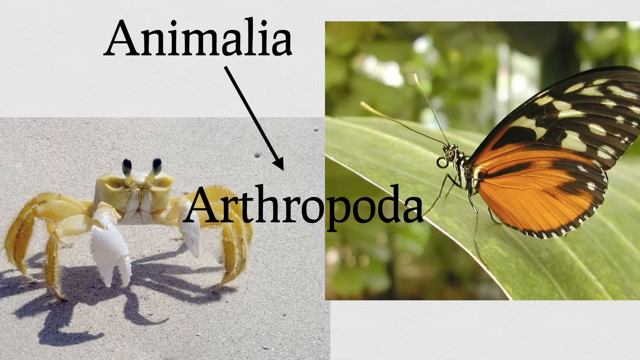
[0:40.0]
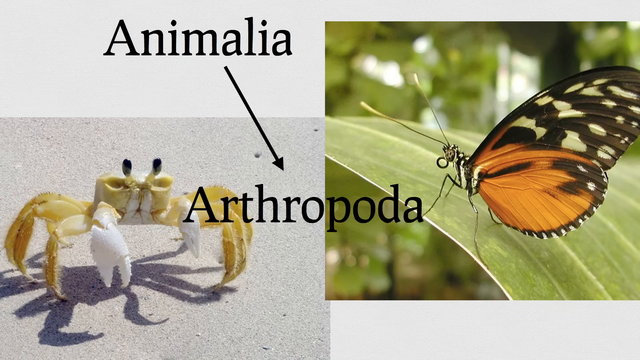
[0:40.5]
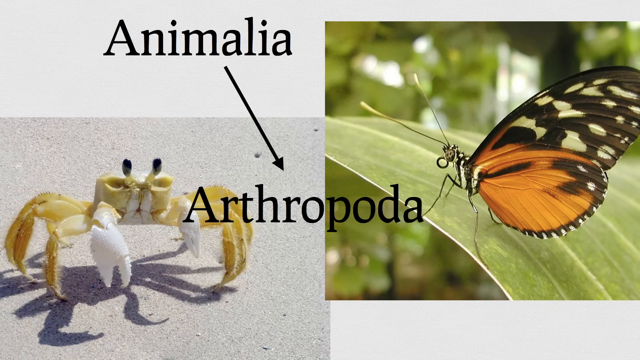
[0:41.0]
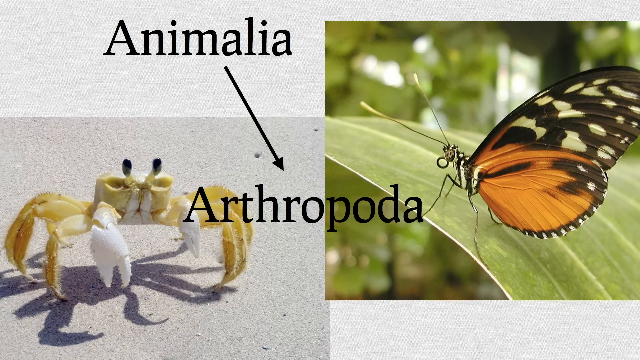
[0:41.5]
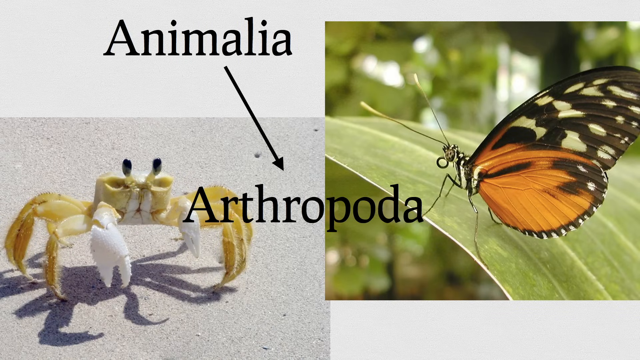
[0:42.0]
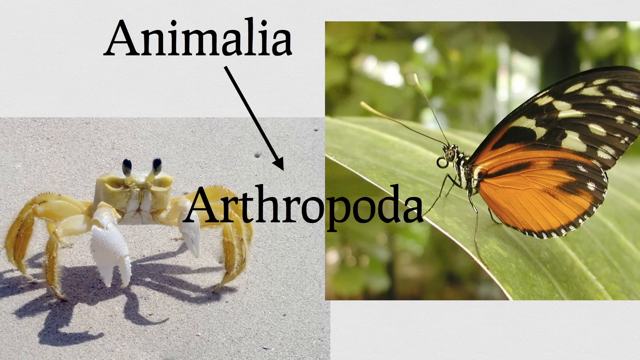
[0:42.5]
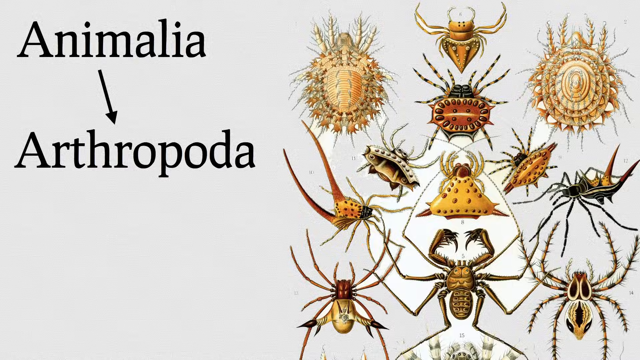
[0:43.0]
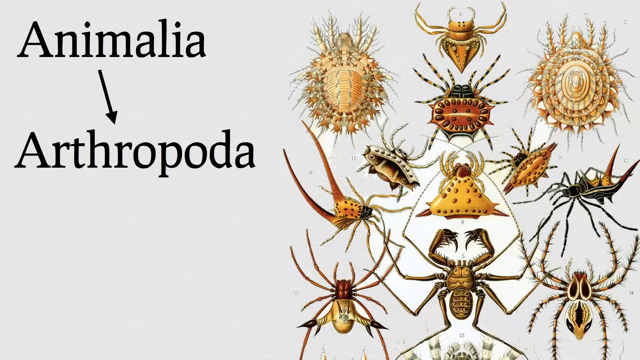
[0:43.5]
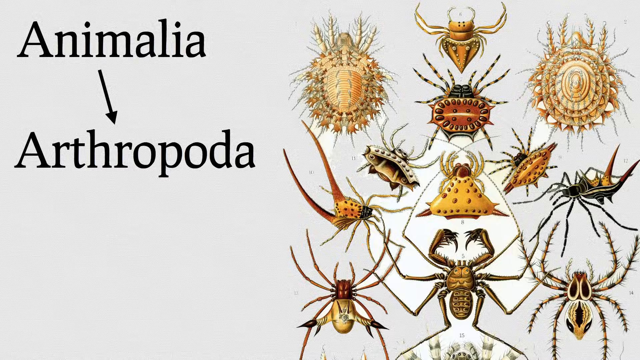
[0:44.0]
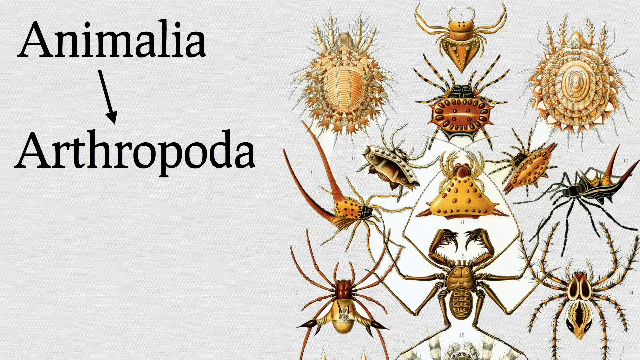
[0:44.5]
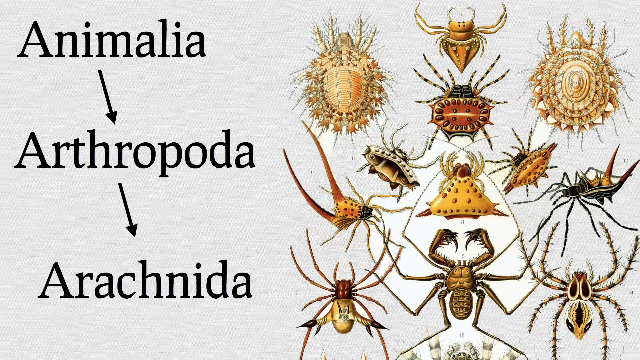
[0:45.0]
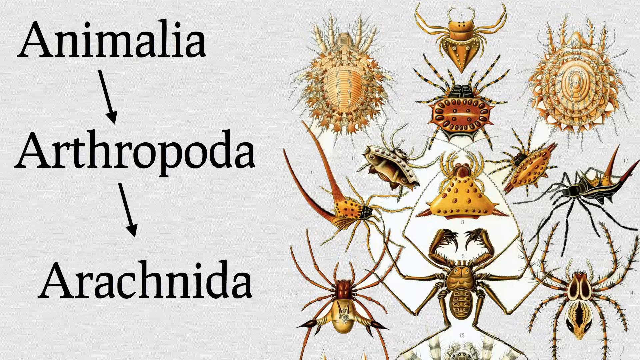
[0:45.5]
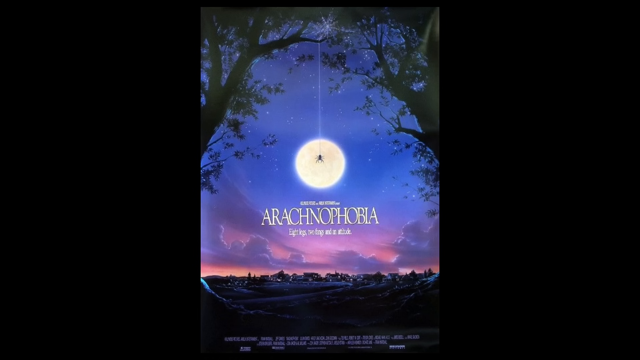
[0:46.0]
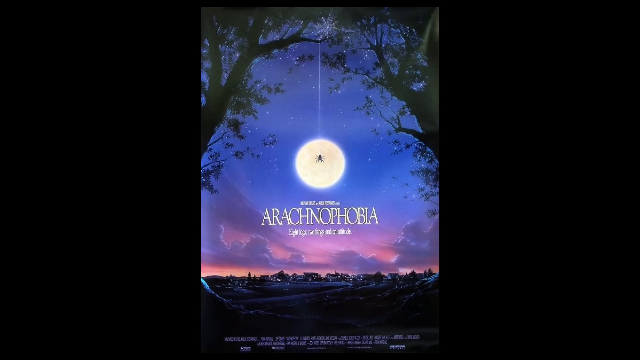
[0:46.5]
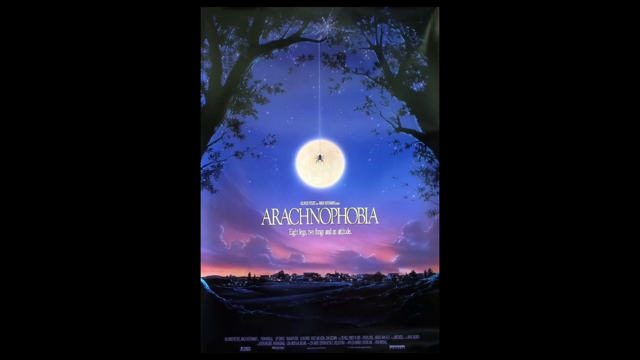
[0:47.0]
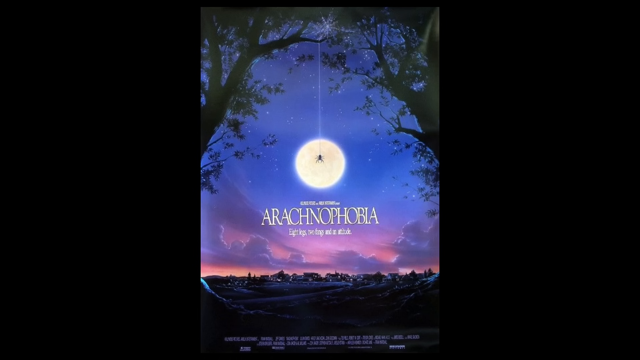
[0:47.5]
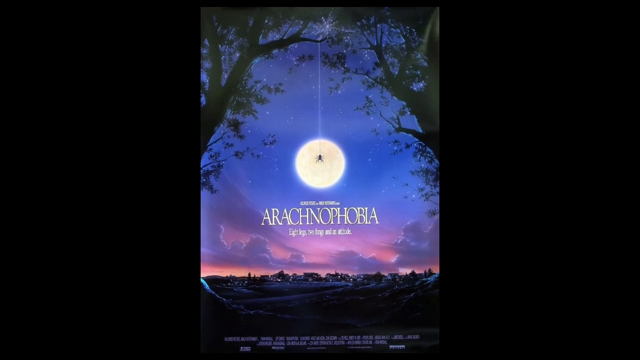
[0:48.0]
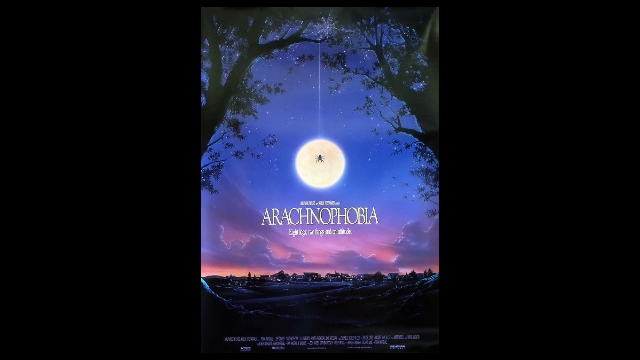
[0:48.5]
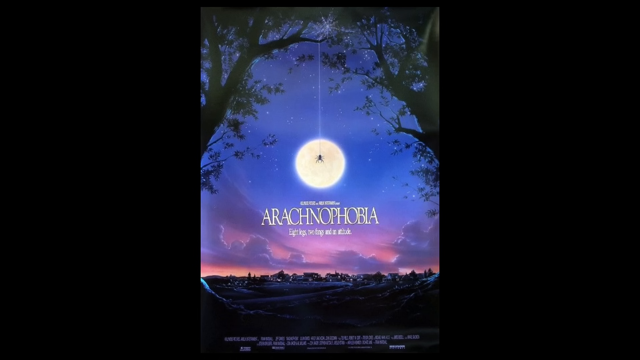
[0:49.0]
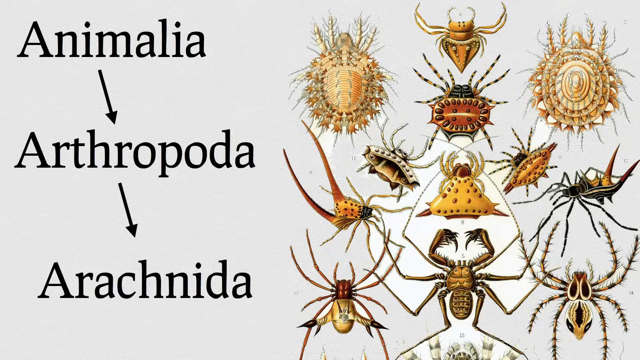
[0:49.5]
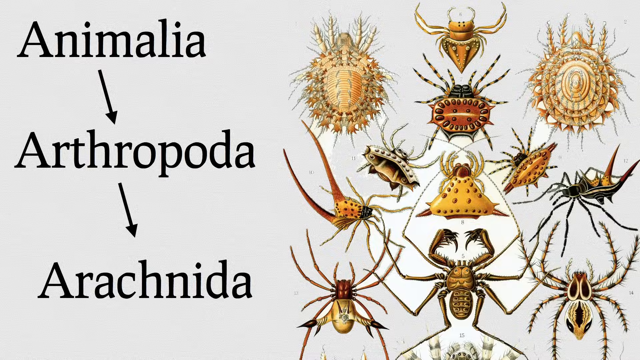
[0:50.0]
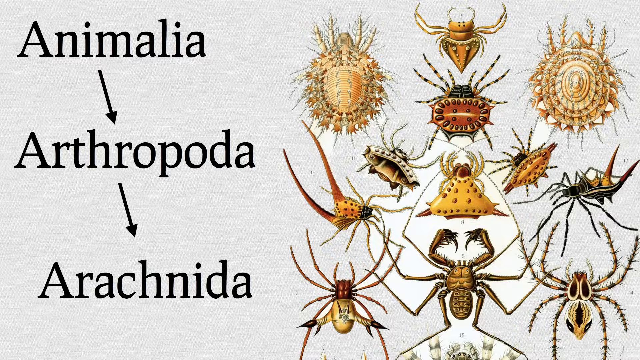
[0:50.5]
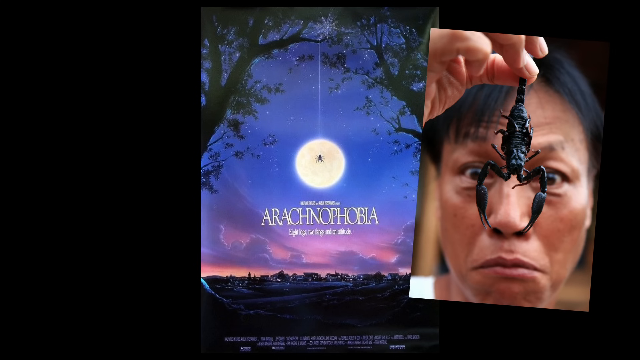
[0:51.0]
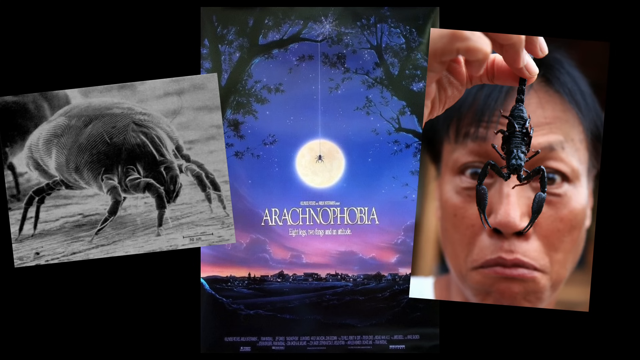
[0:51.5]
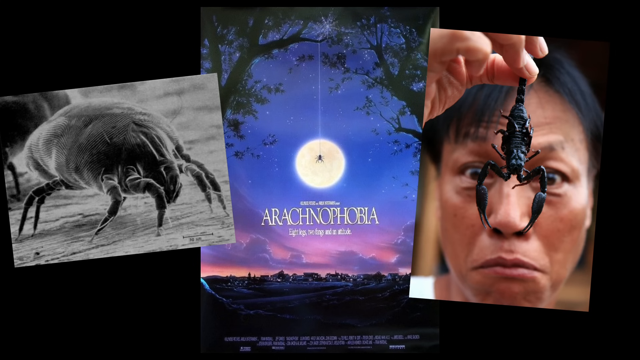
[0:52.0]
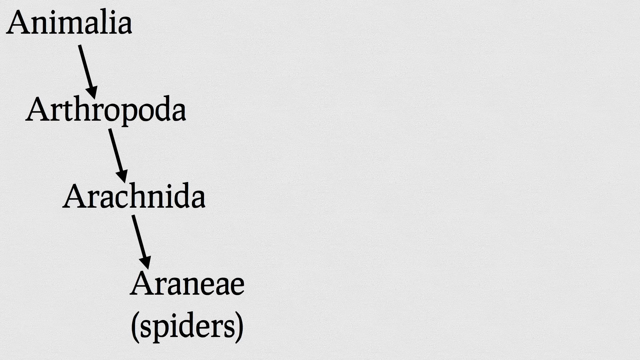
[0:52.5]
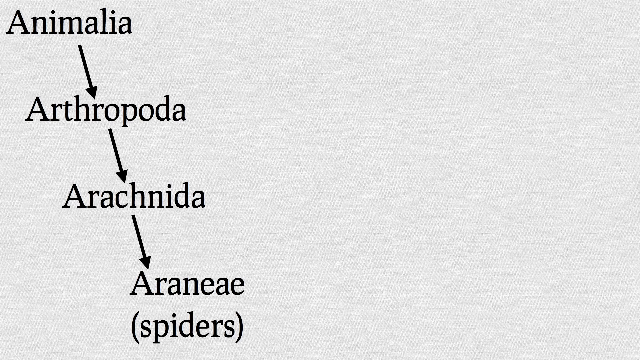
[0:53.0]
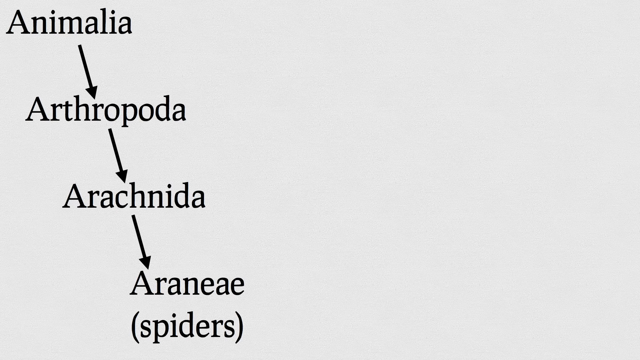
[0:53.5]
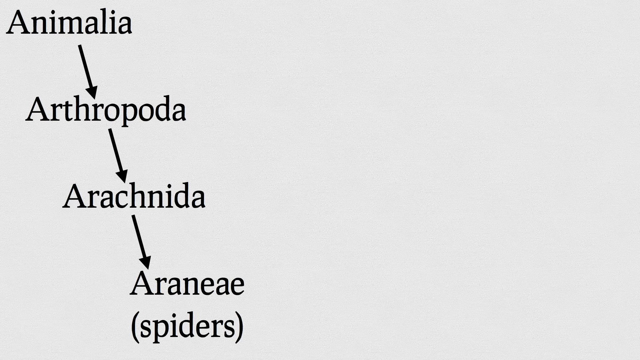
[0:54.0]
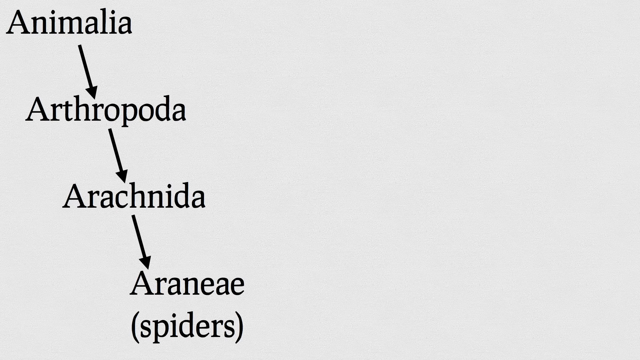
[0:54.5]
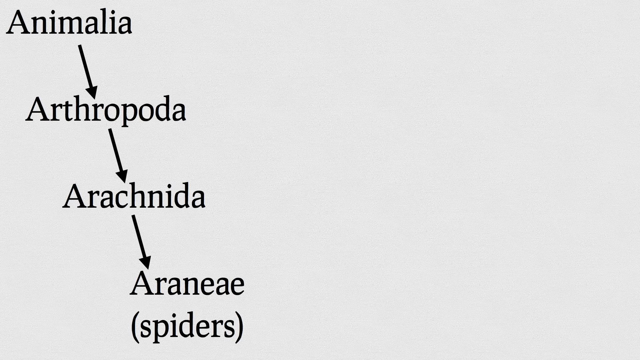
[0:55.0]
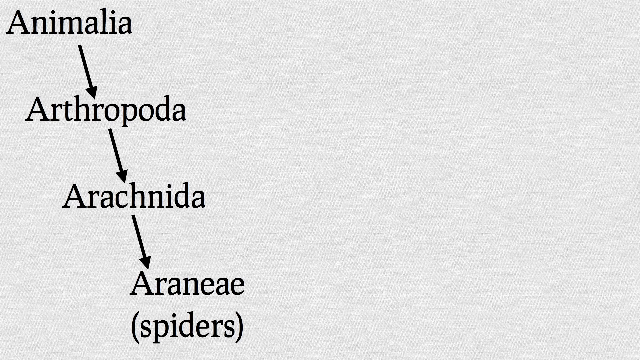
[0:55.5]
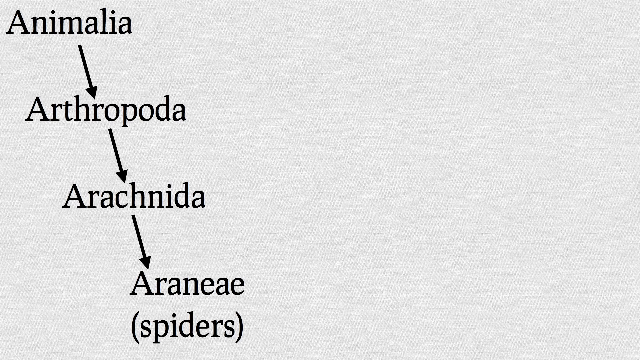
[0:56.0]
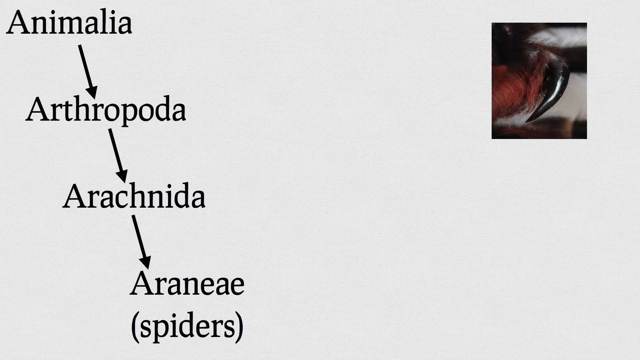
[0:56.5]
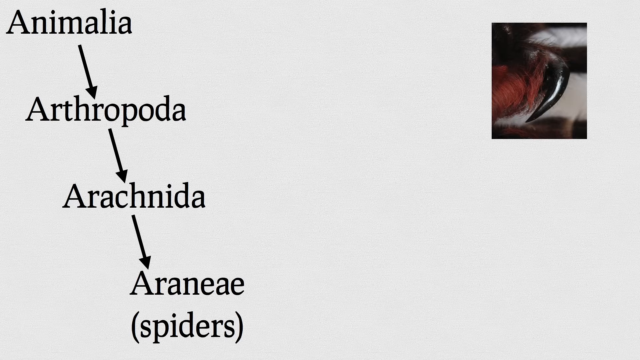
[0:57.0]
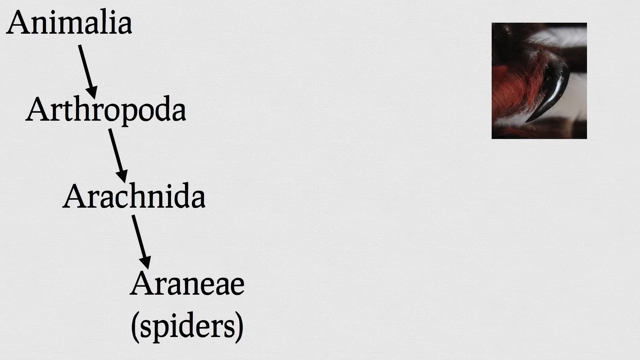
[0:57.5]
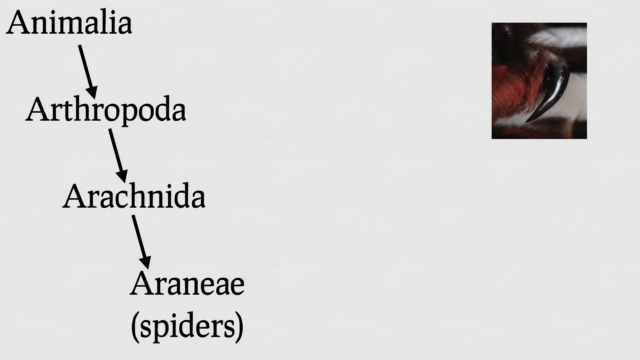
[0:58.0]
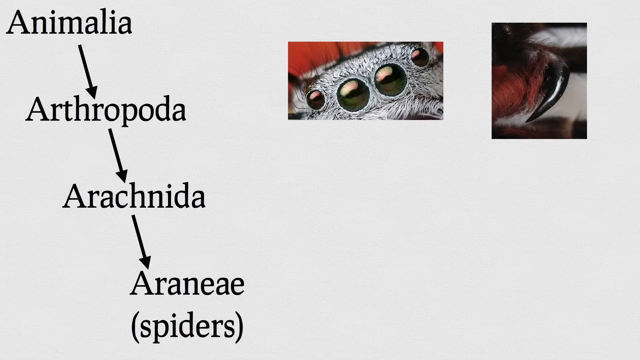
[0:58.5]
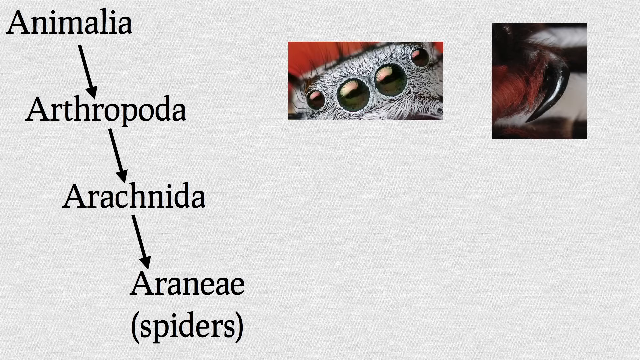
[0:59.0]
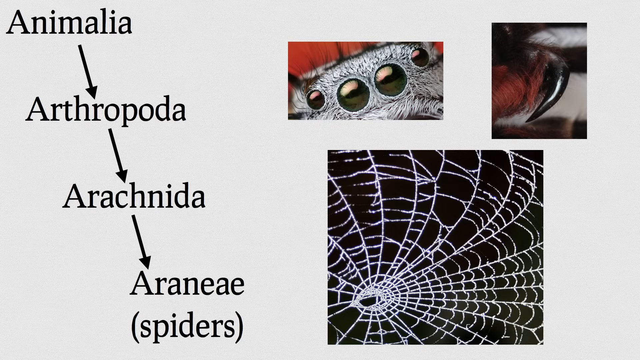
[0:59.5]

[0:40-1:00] The title page shows "Animalia" with an arrow to "Arthropodia", along with a picture of a white crab and what appears to be a monarch butterfly resting on a green leaf. Another page has "Animalia" written in the top left with the arrow to "Arthropodia", showing different types of arthropods that live on land. Another arrow is added to "Arachnidia". Next is a page with a spider hanging between two trees against a twilight blue and purple evening background lit by moonlight; the spider seems to be hanging in the middle of the moon. The video moves to another page showing different types of land arthropods, with arrows from Animalia to Arthropodia to Arachnidia, then returns to the purple twilight setting with the spider hanging in front of the moon. On the left side is a black image of what appears to be a tick, and on the right is a woman holding a black scorpion, who seems somewhat afraid. A white title page then shows the classifications going from "Animalia" to "Aranae" with arrows in between, followed by images of a spider's fang, a spider's four eyes, and a spiderweb.